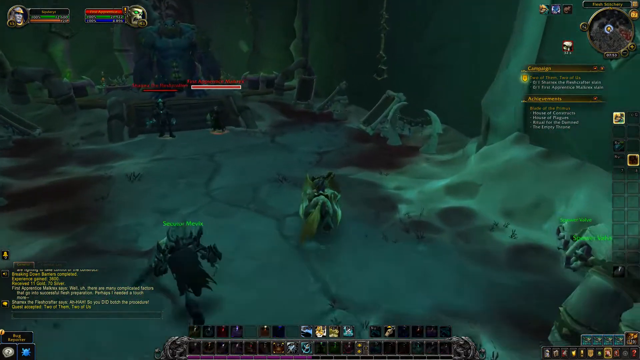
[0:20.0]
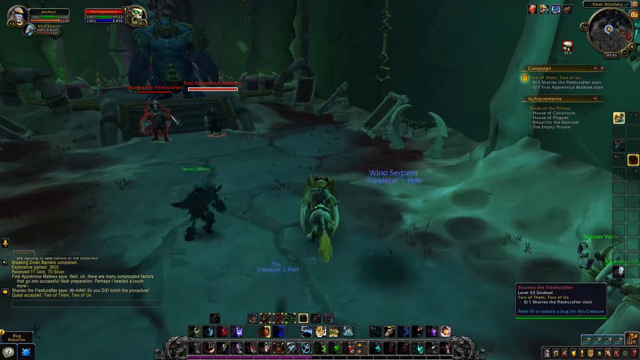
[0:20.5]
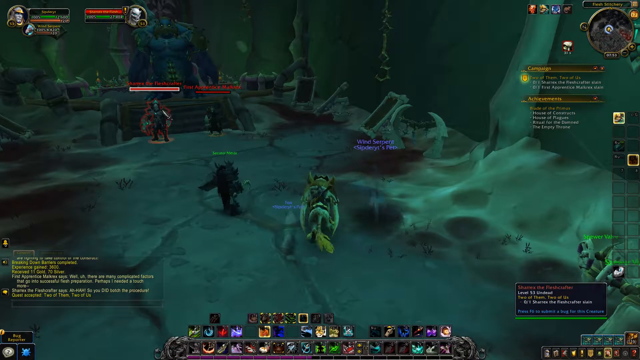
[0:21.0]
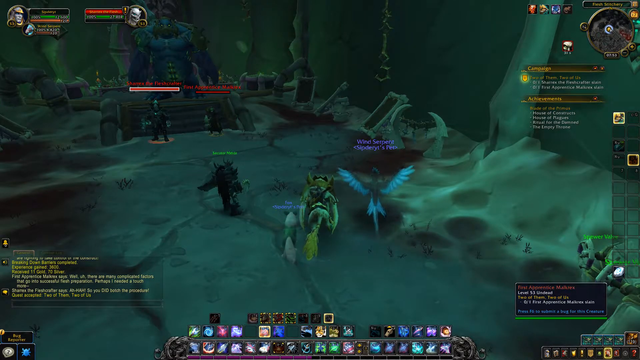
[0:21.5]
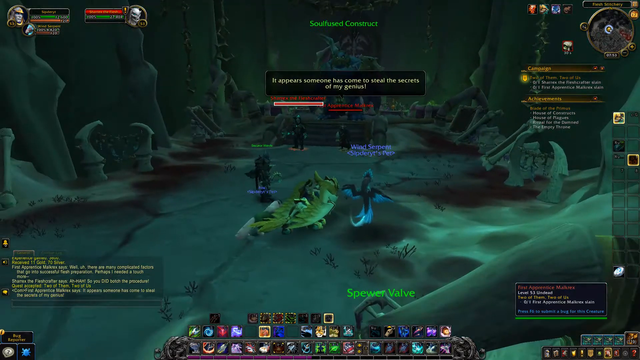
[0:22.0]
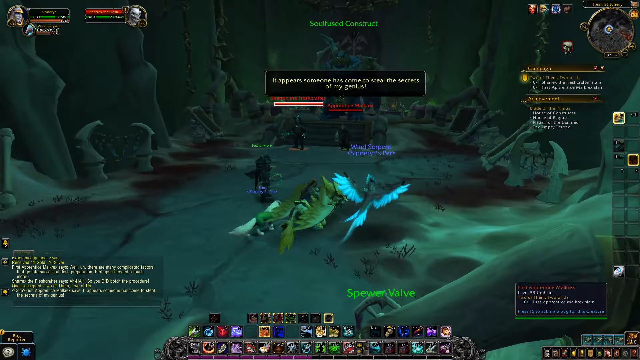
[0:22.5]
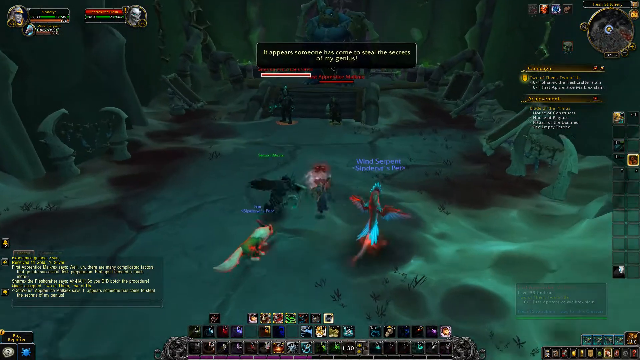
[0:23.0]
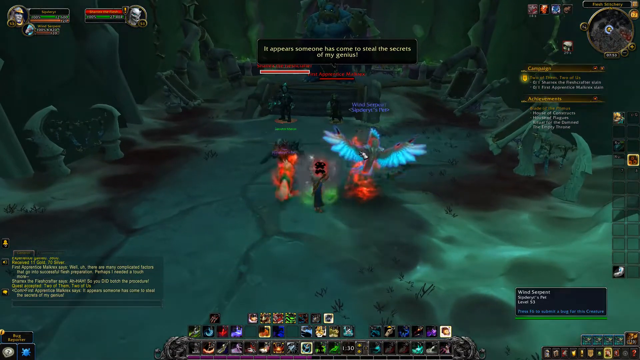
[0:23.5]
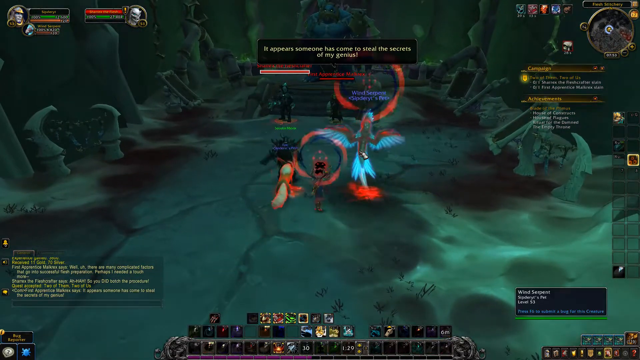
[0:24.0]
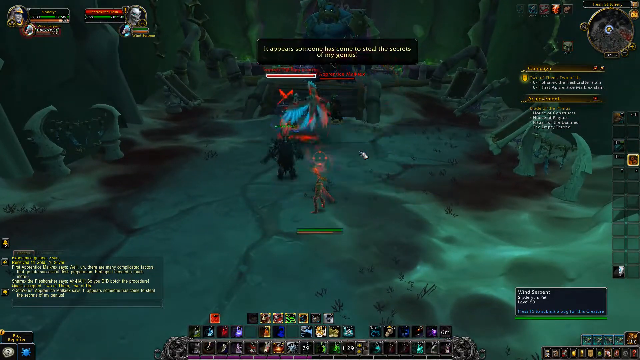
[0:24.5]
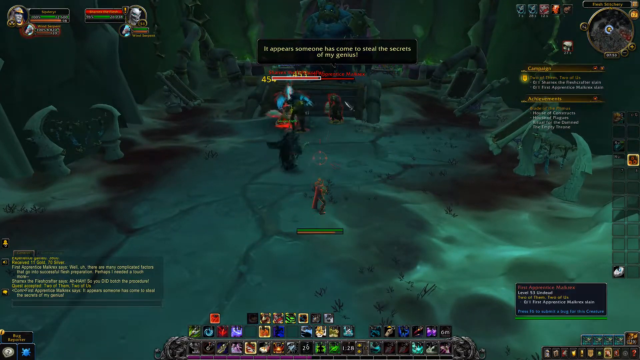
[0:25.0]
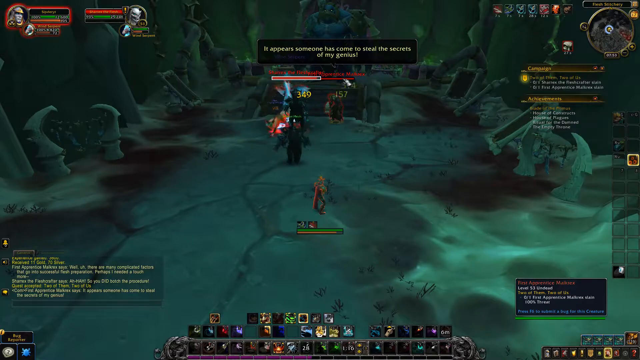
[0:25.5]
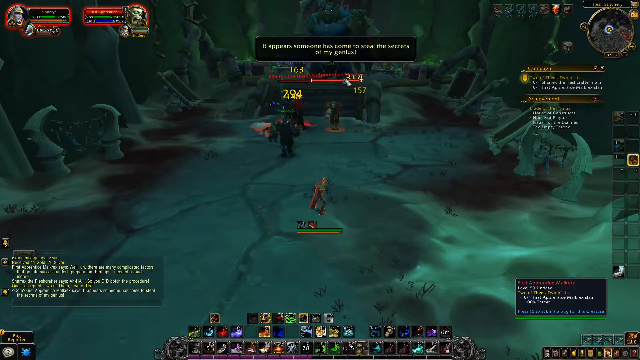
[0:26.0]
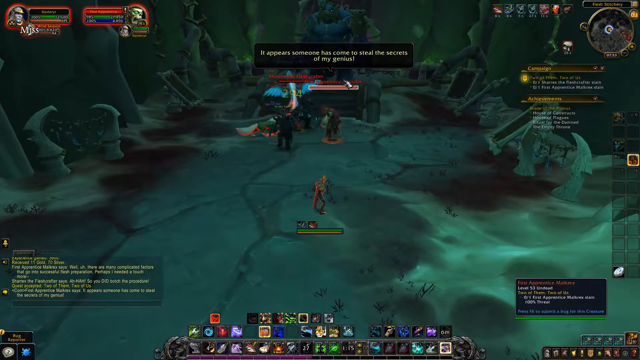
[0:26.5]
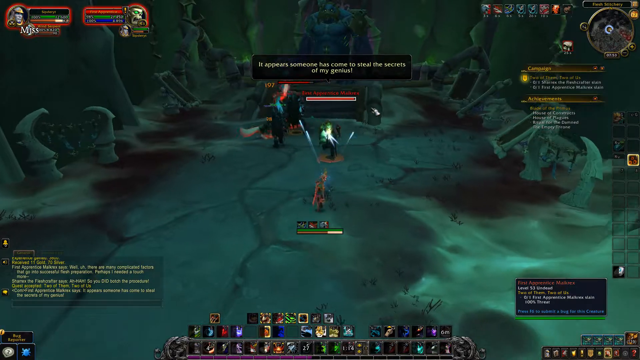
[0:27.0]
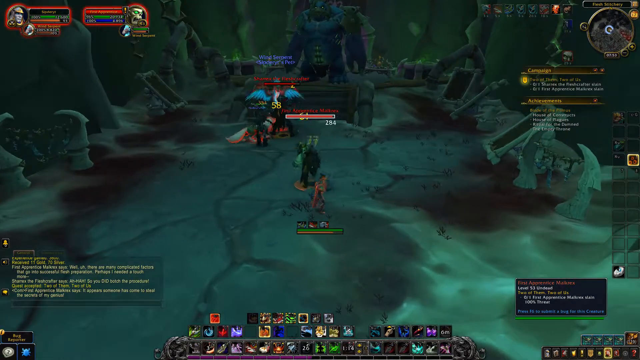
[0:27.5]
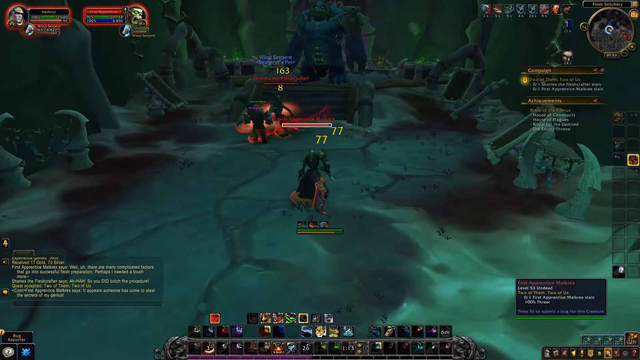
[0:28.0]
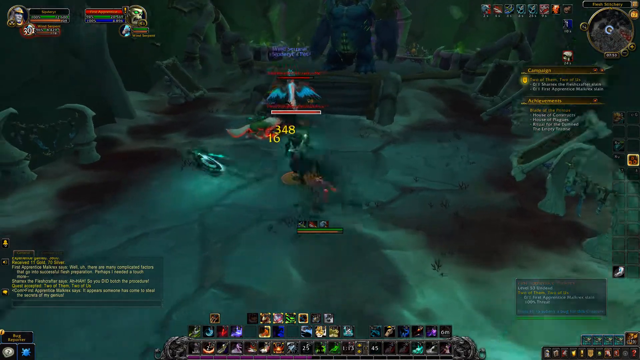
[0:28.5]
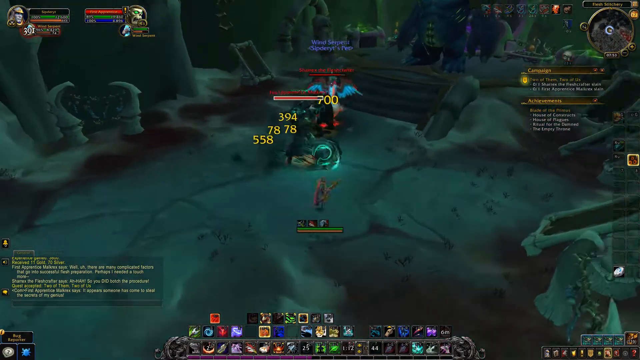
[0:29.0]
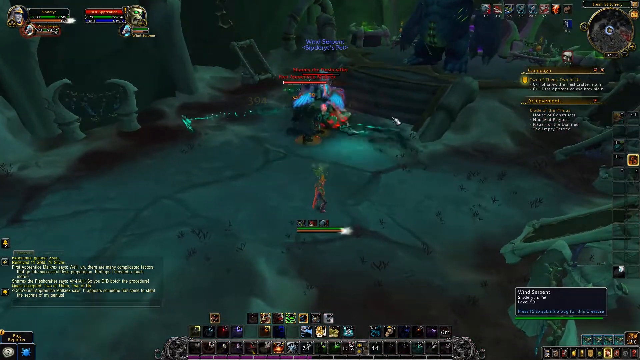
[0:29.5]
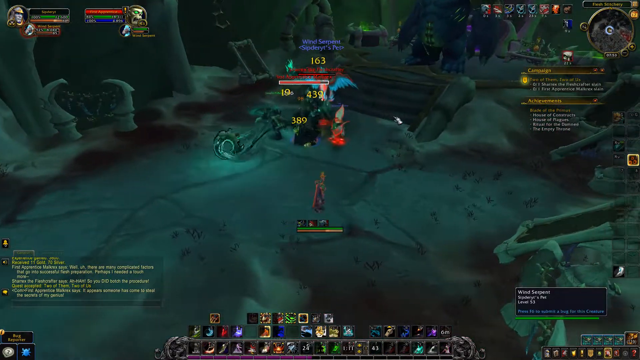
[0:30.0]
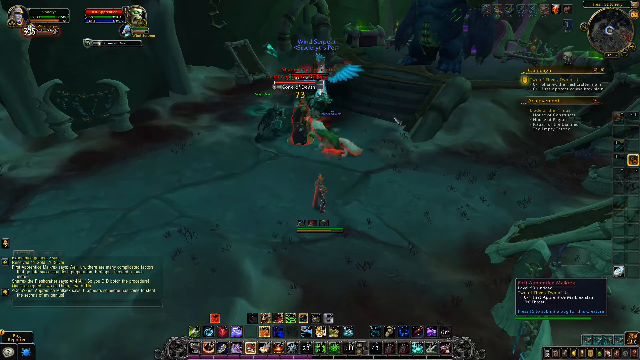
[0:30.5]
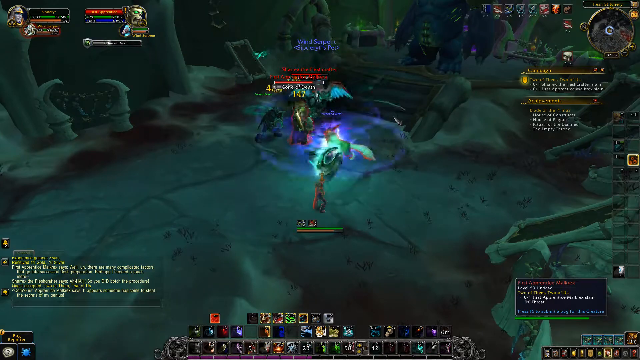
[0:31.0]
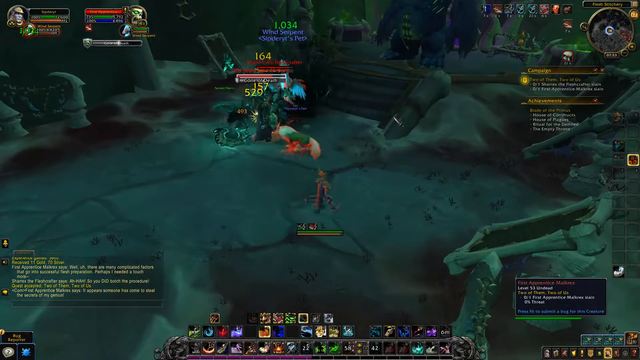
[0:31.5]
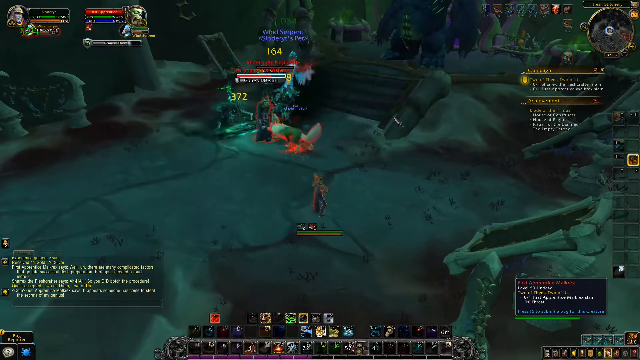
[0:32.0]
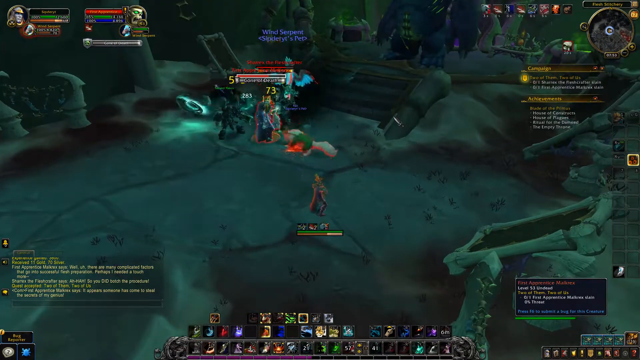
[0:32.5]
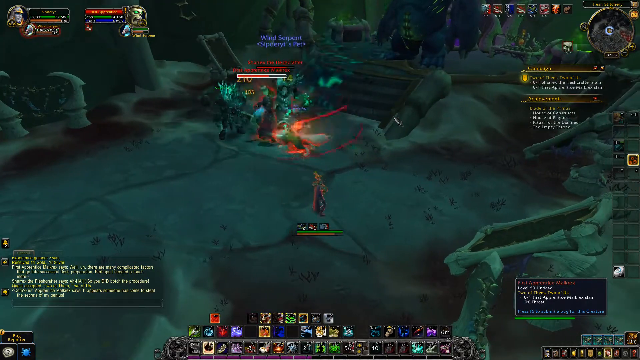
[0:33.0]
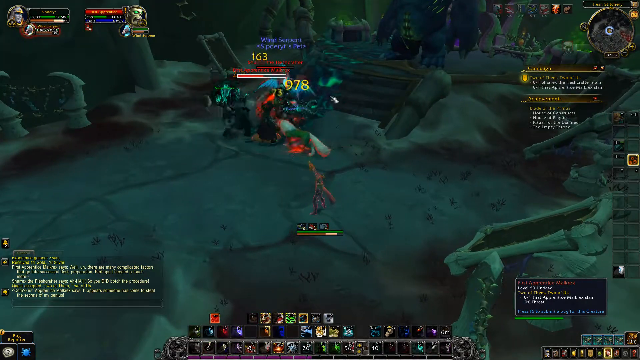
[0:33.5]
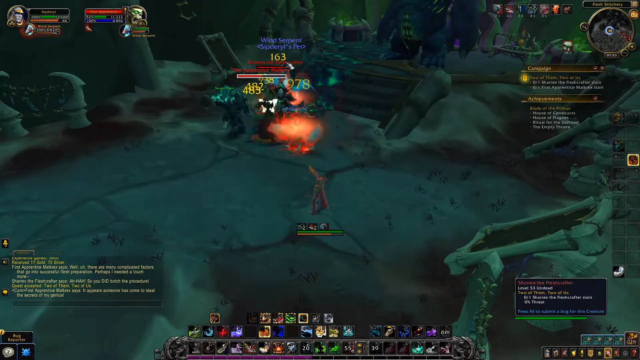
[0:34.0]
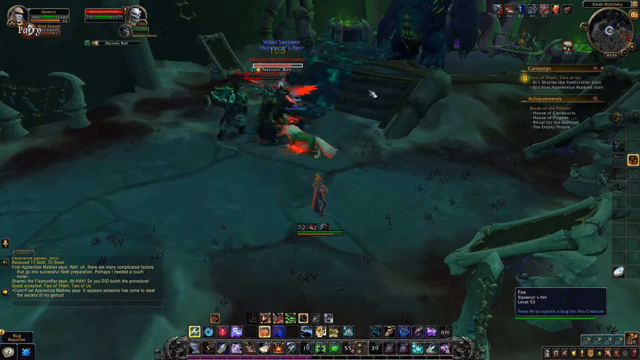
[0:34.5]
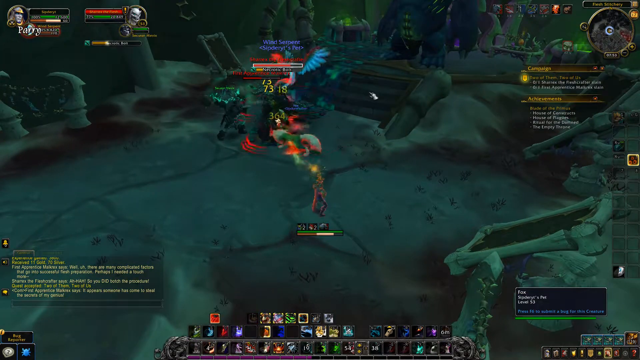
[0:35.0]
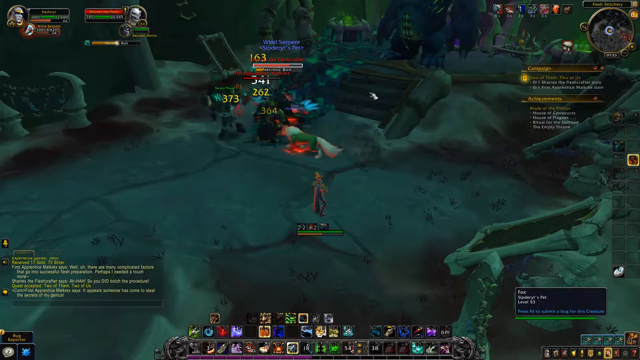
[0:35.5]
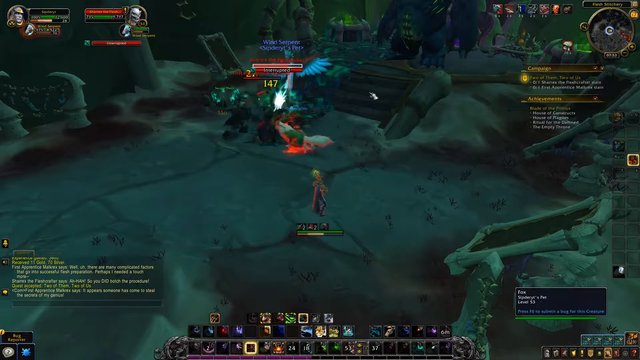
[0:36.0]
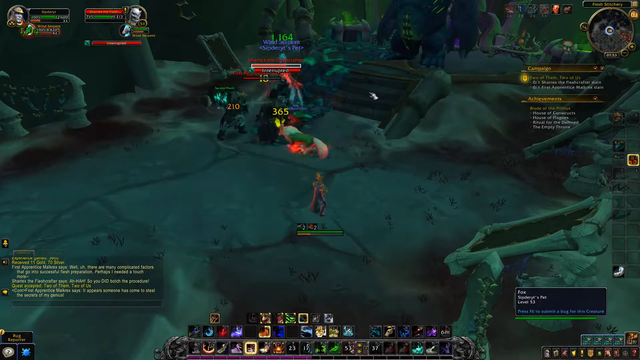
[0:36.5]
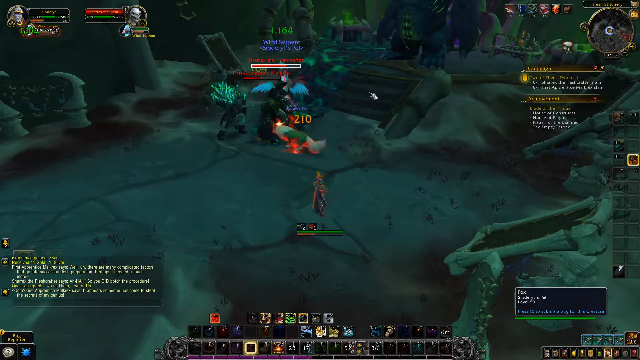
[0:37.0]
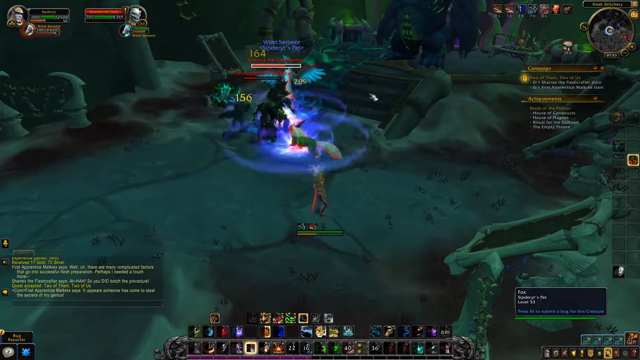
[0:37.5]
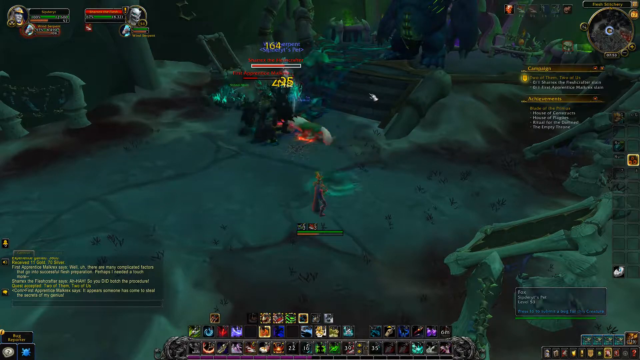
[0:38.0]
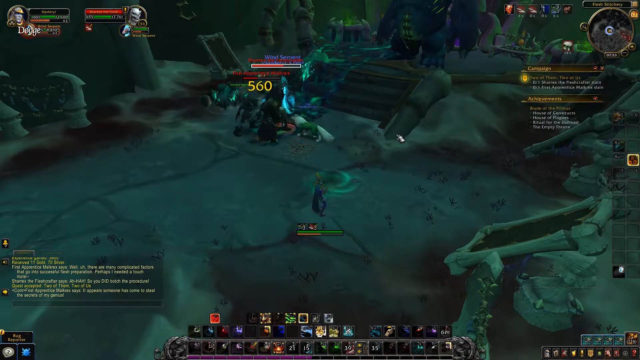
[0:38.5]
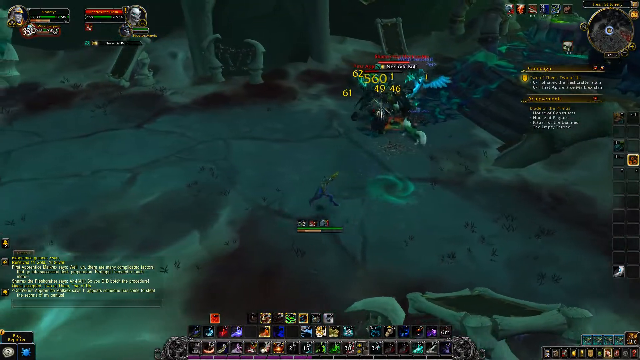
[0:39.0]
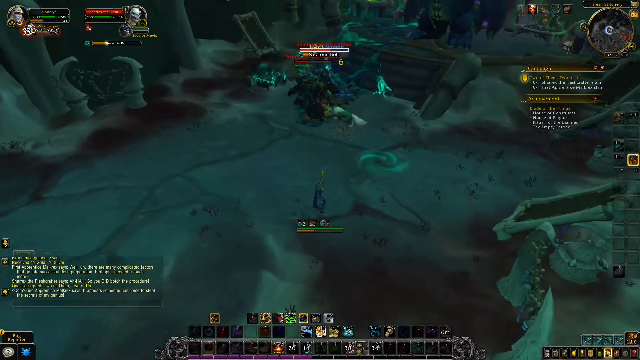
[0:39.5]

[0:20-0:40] The player is on the creature, with a bird-like creature right next to it and another creature; apparently these can be sent off to fight. The main character is shooting something like a gun. A little shadow creature is killing people, and a wolf-like creature is fighting. The main character apparently uses animal-like creatures, which look like some type of mythical creatures, to fight for them. They are collecting points.